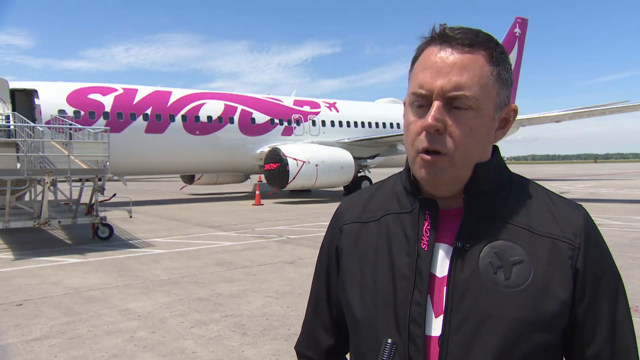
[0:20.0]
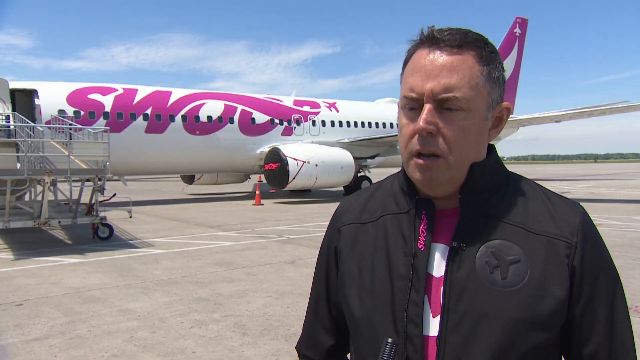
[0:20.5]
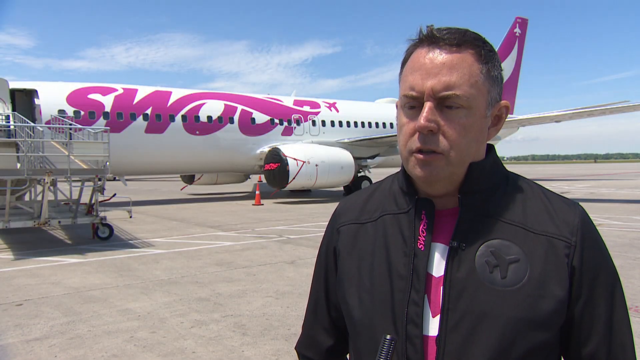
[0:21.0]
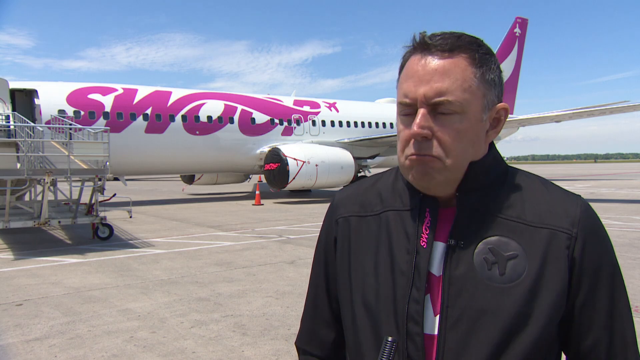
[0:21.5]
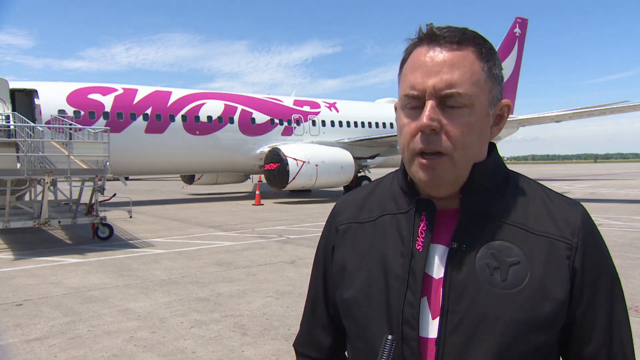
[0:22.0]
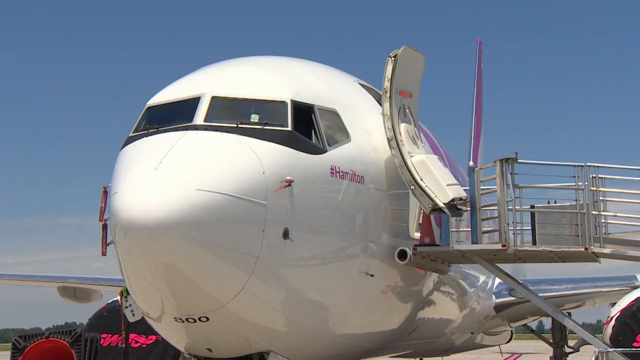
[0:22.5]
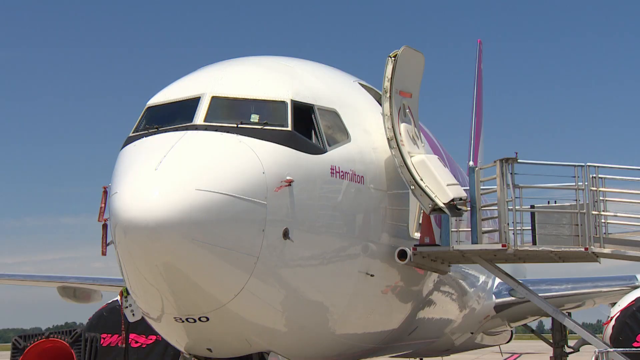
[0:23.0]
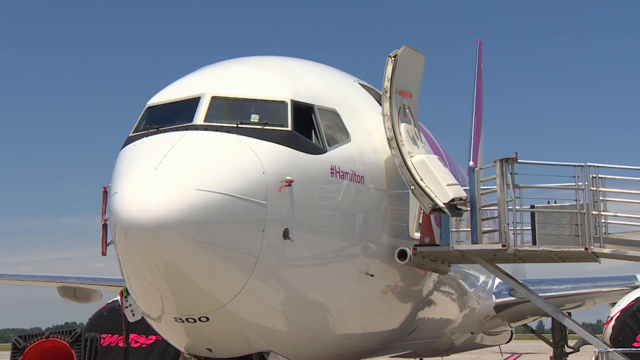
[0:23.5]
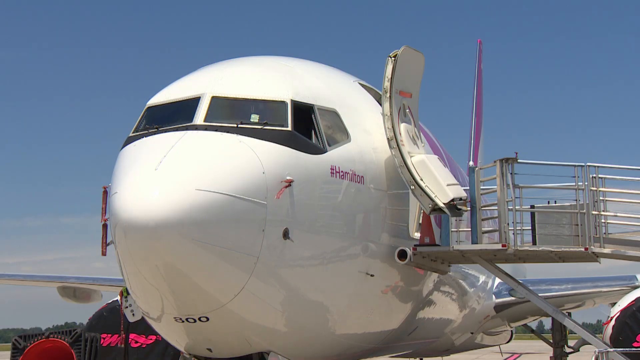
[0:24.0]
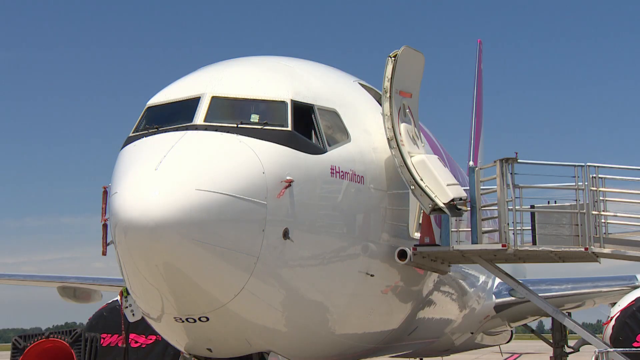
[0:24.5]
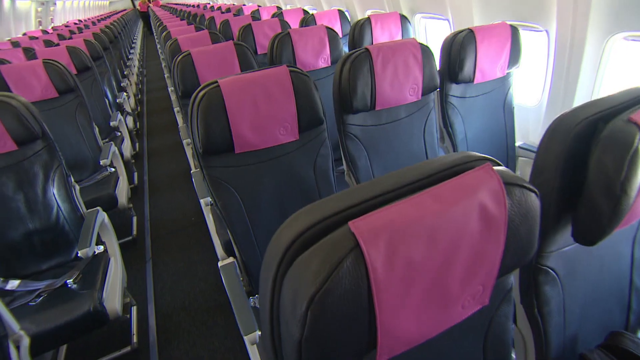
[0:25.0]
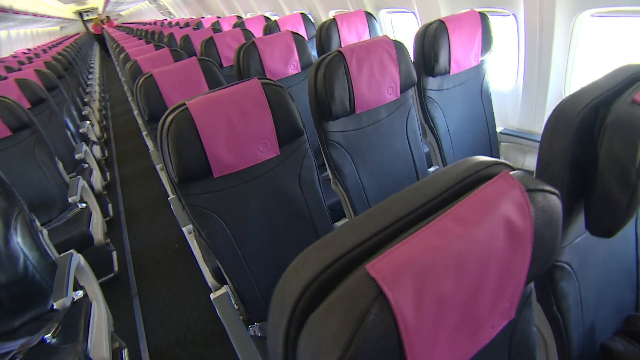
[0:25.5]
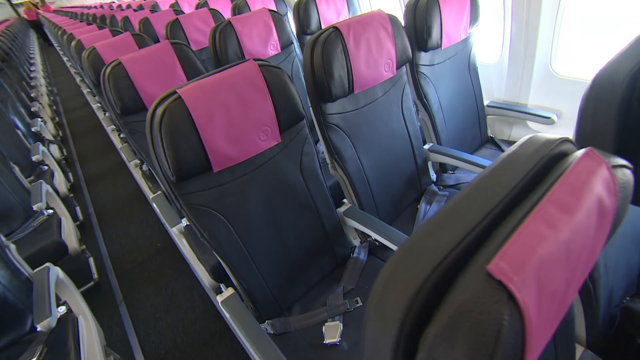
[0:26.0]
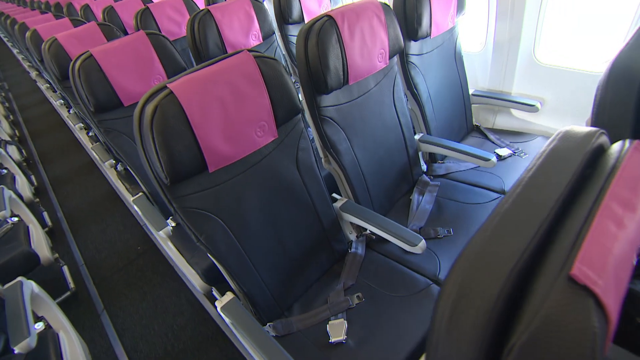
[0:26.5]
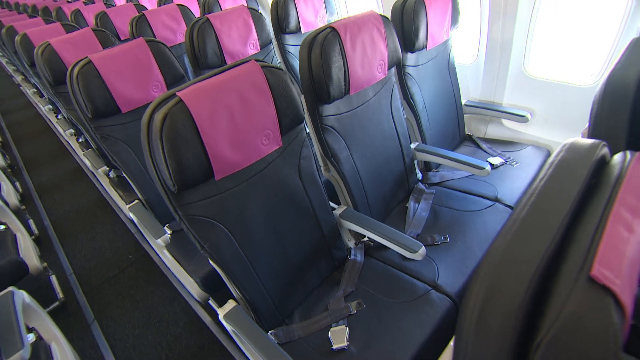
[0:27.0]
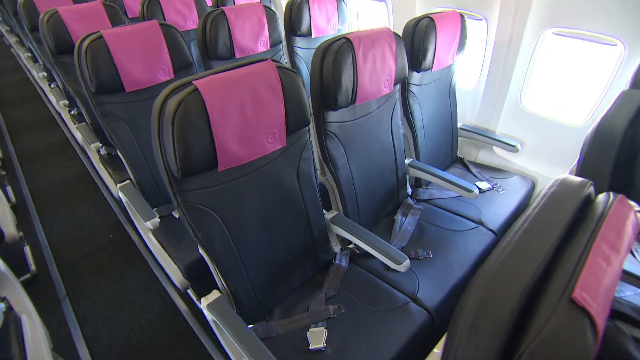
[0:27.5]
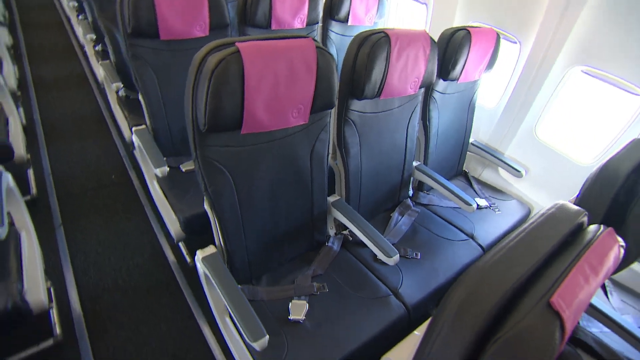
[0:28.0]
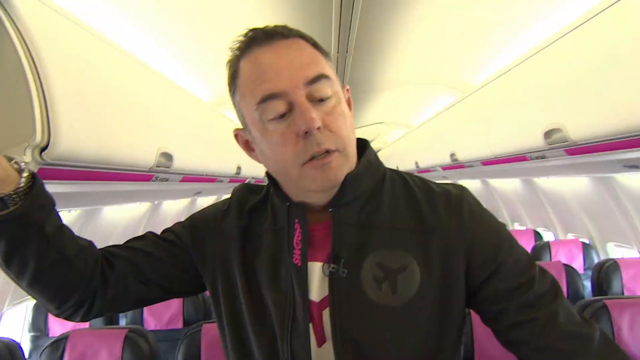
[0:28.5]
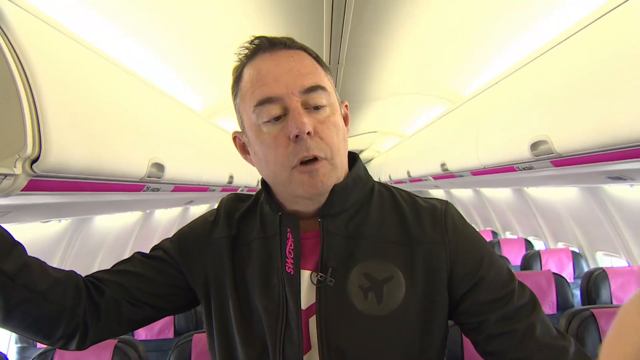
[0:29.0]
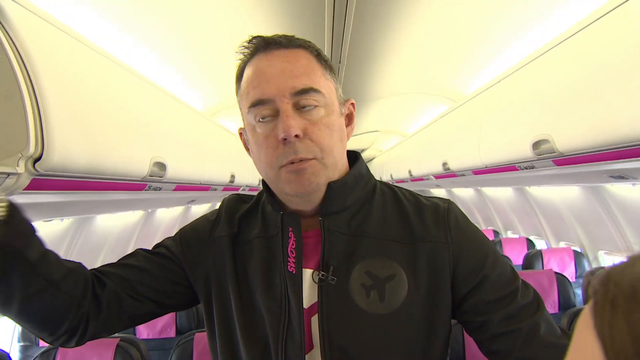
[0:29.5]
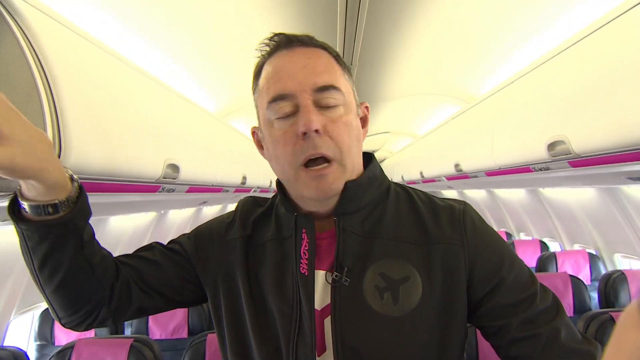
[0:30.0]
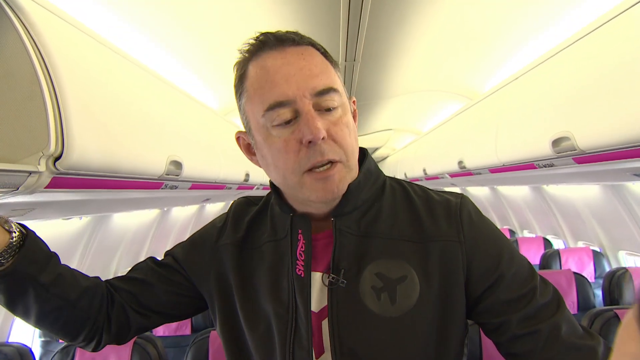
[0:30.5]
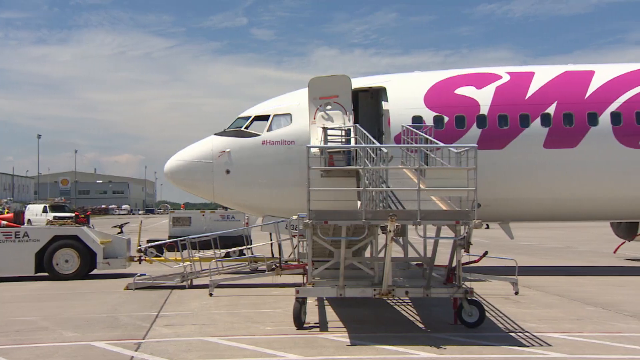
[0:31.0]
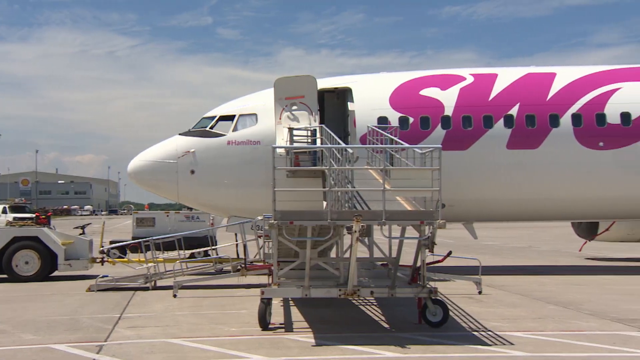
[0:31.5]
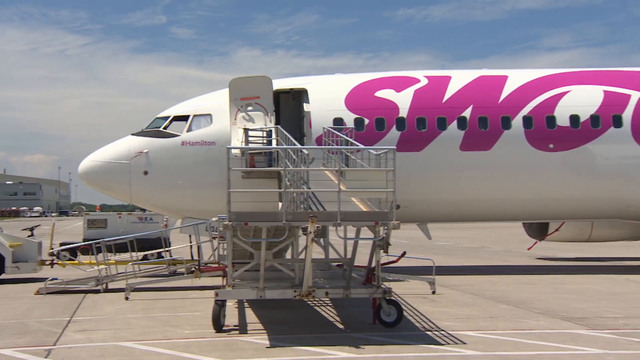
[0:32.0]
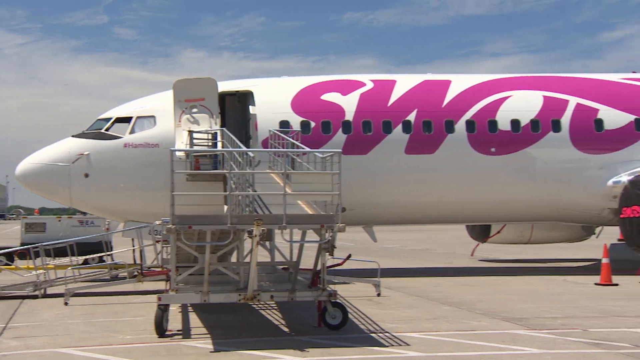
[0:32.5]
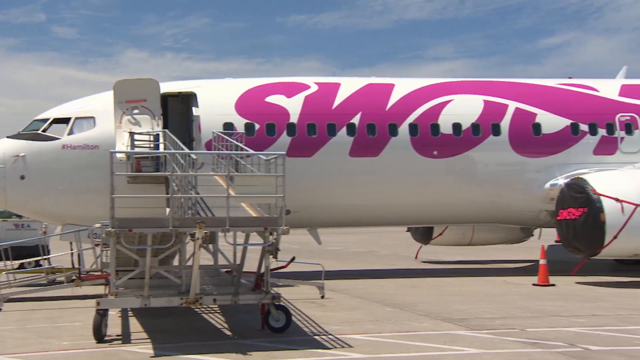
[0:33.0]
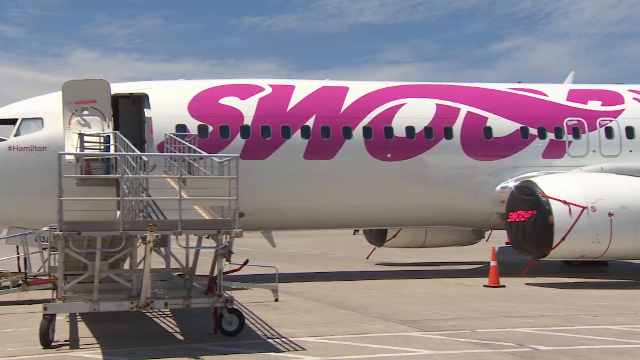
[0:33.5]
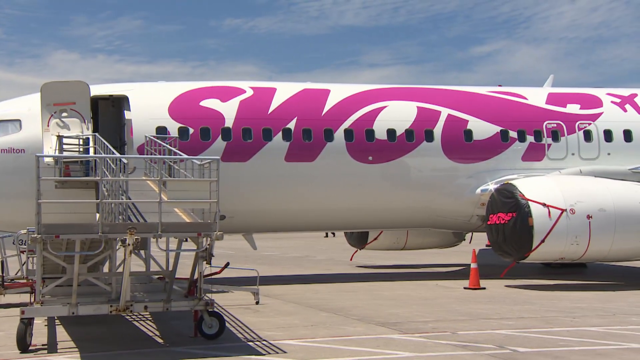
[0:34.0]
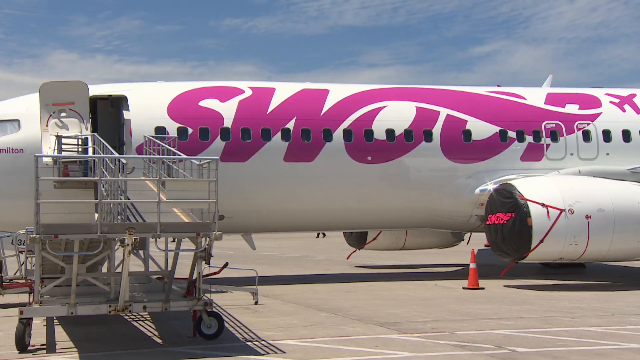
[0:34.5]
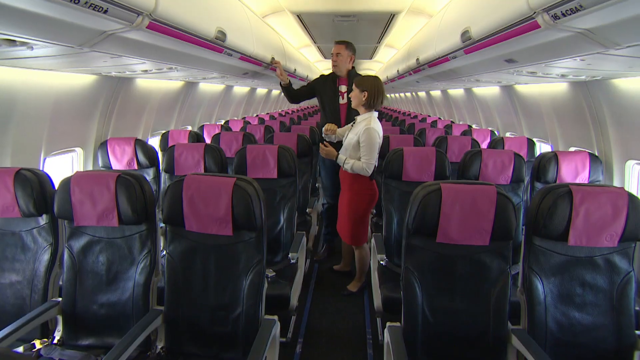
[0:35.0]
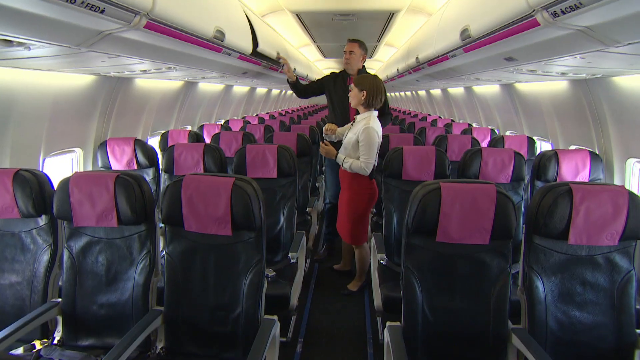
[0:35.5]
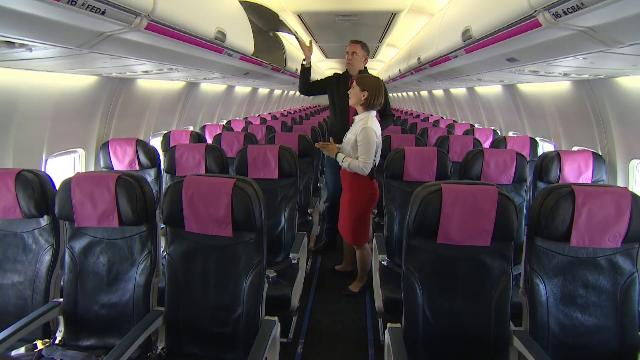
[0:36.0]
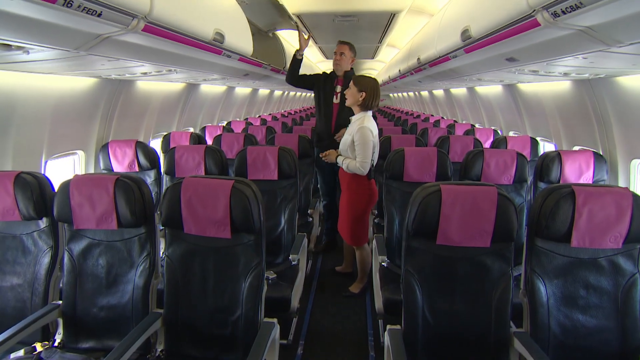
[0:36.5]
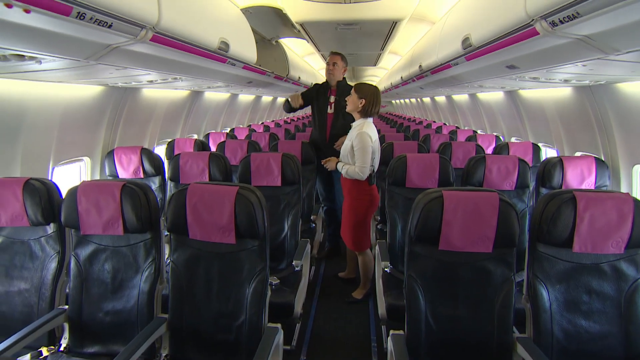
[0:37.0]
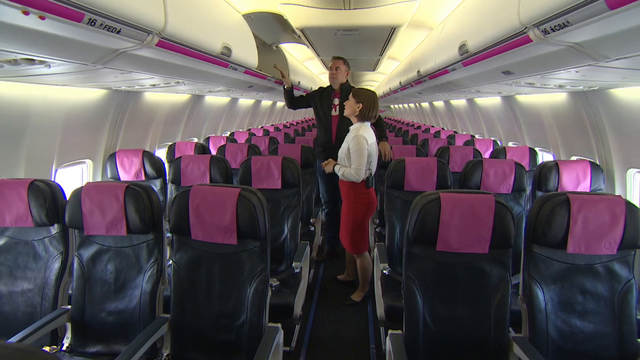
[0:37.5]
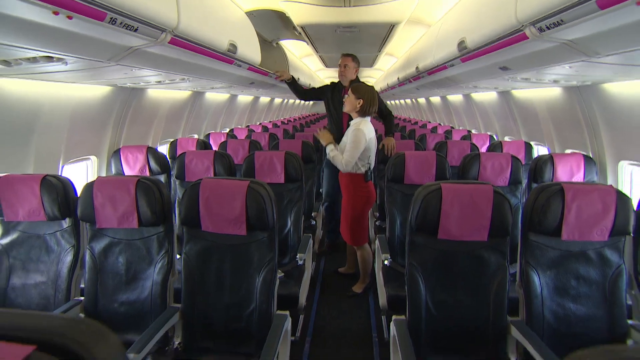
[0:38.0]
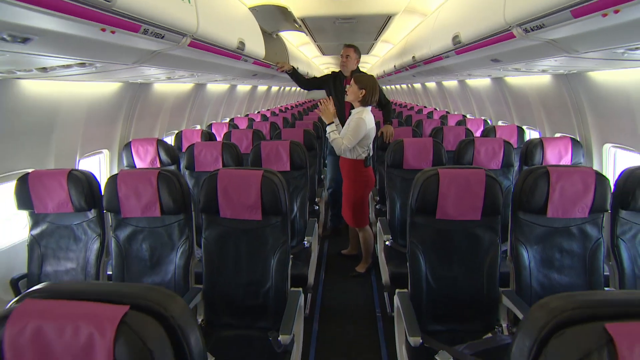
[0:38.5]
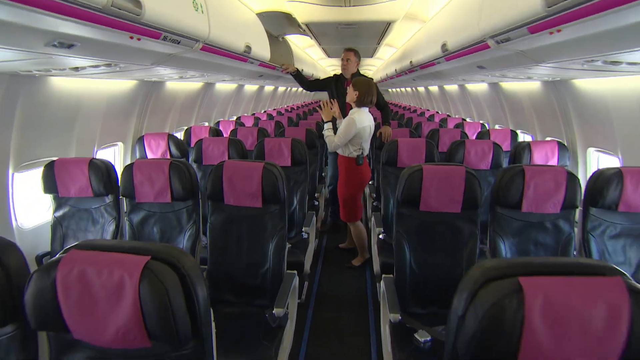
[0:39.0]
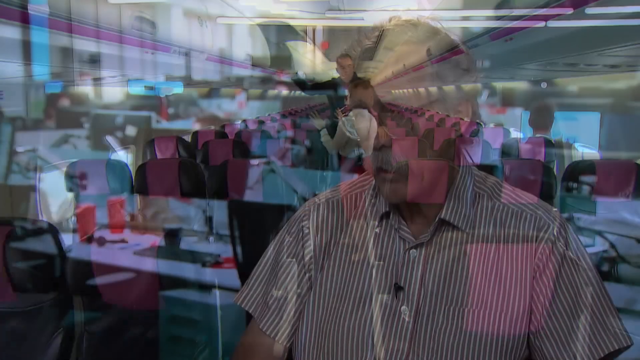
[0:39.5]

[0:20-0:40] A man gives an interview in front of an airplane. The airplane is parked so that its left side is visible, with its logo facing the camera. The man, on the right side of the frame, wears a black jacket and a pink shirt that match the airplane's branding. The airplane's front passenger door is open, with a passenger loading ramp pushed up to it, and an orange traffic cone is placed in front of the airplane's turbine engine. The man talks toward the camera, looking slightly to the left of the frame. The video cuts to a front view of the airplane: underneath the front windscreen, text reads "#Hamilton", and the back of the open main passenger loading door is visible. Next comes an interior view of the airplane, which has two rows of seats, each made up of three seats. The camera slowly looks toward the seats, which are all blue with pink headrest cloths. The man from the interview is then shown pointing toward the overhead luggage compartment, followed by an outside shot that starts at the very front of the airplane, moves toward its tail fin, and then pans from left to right.